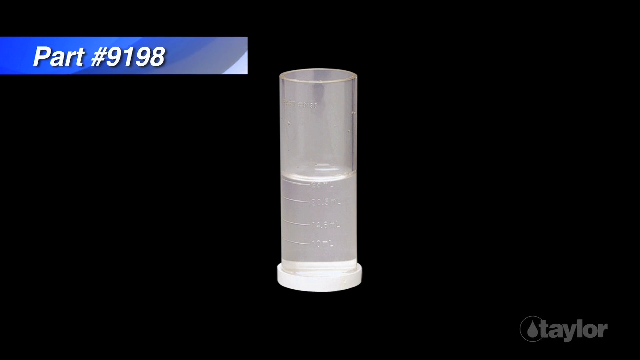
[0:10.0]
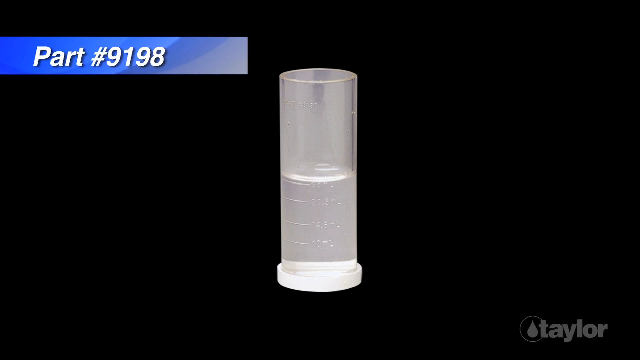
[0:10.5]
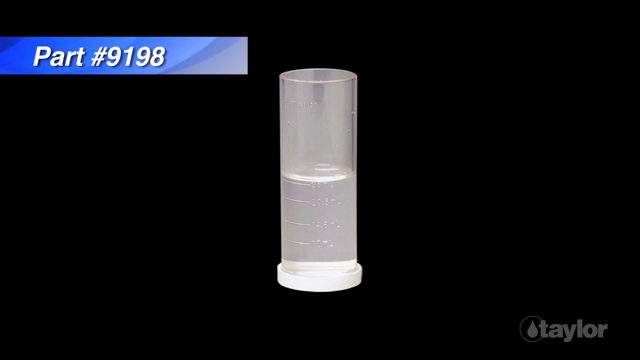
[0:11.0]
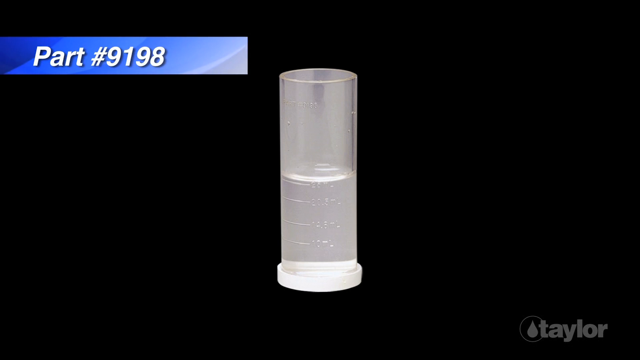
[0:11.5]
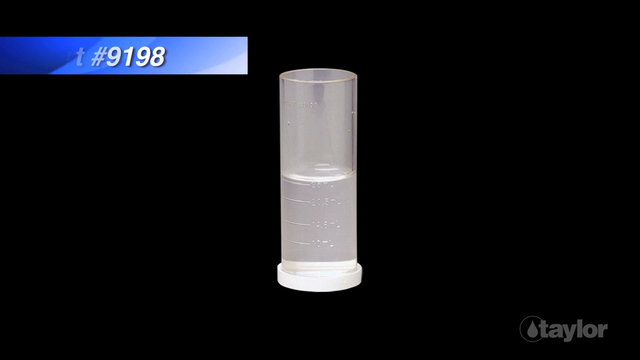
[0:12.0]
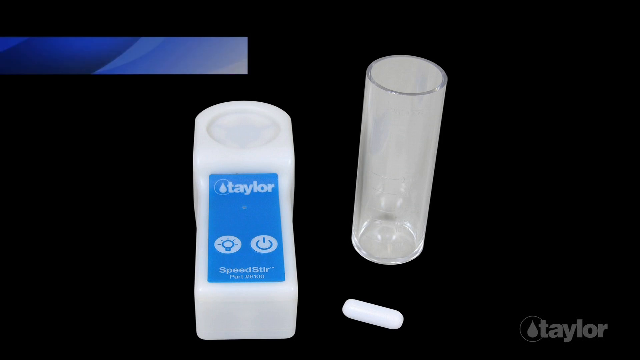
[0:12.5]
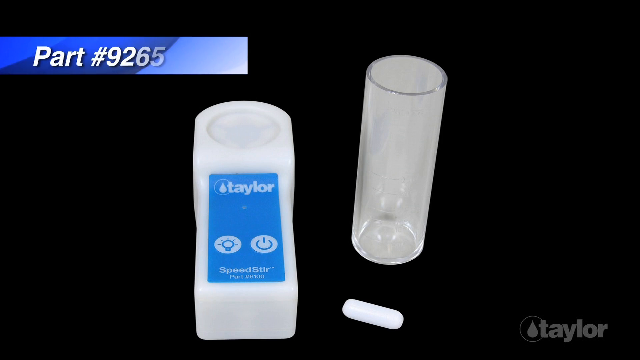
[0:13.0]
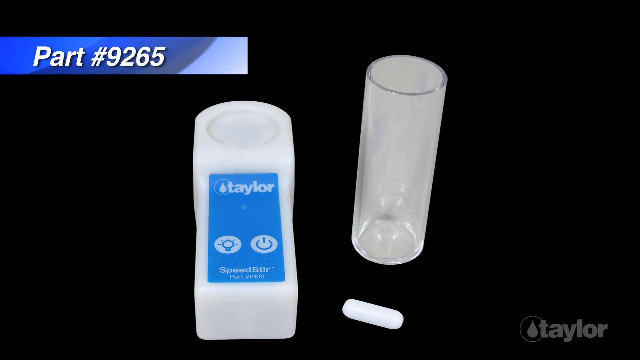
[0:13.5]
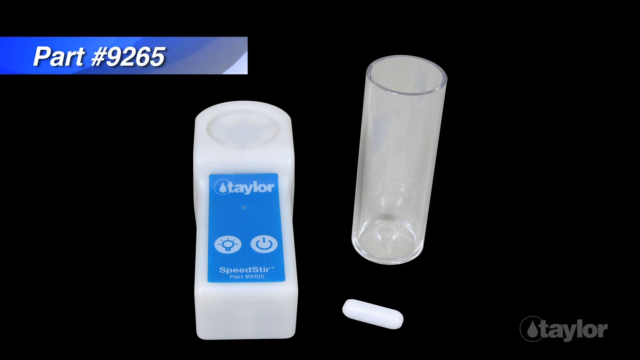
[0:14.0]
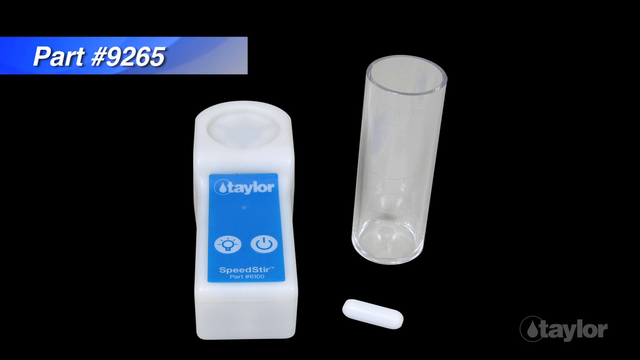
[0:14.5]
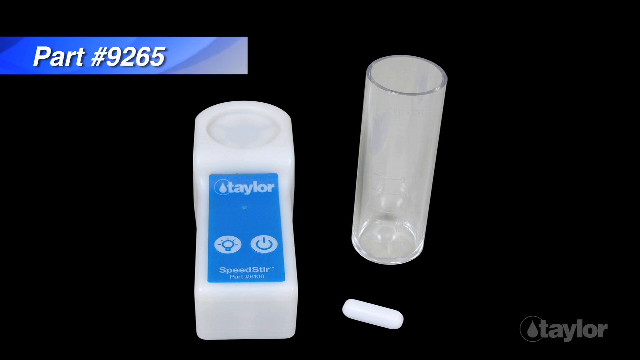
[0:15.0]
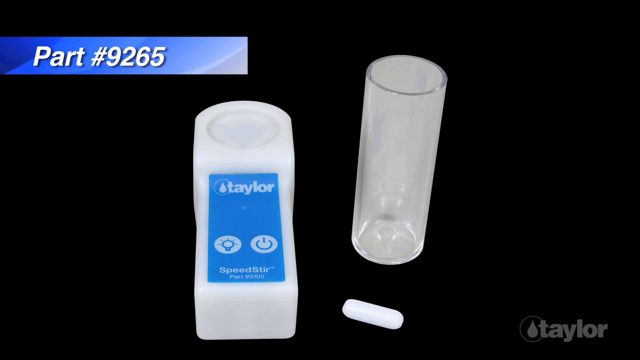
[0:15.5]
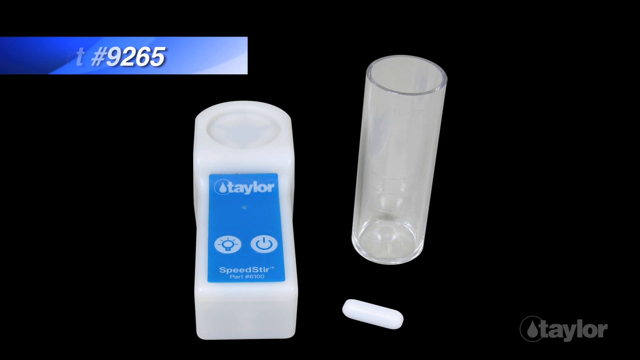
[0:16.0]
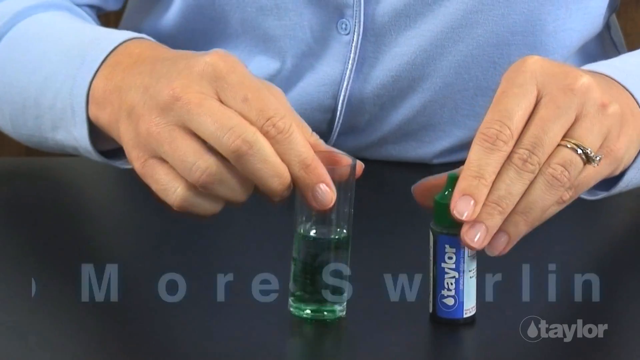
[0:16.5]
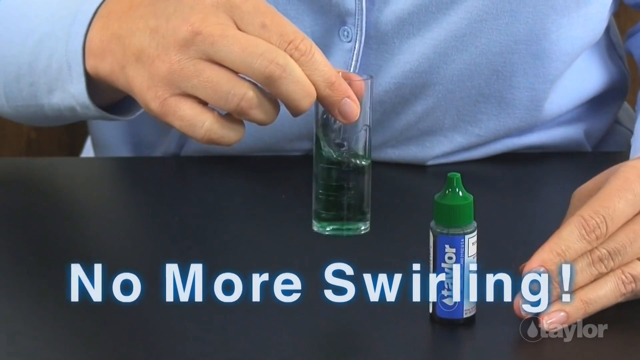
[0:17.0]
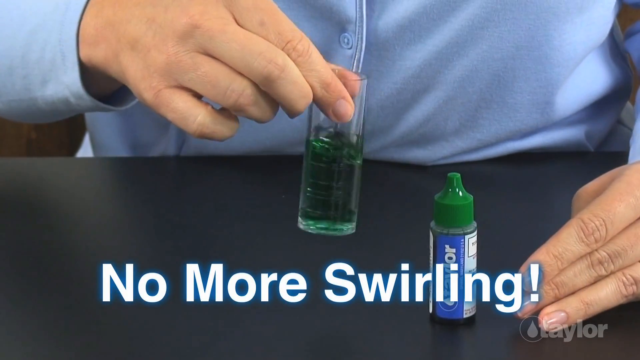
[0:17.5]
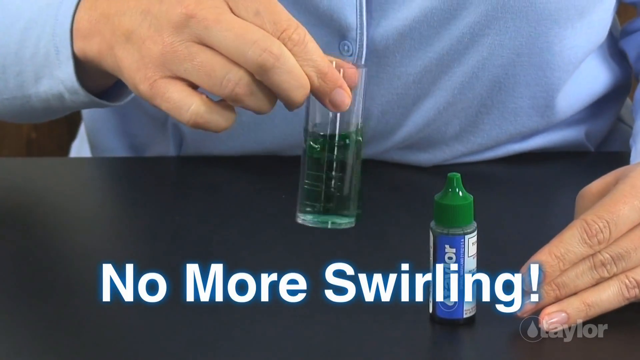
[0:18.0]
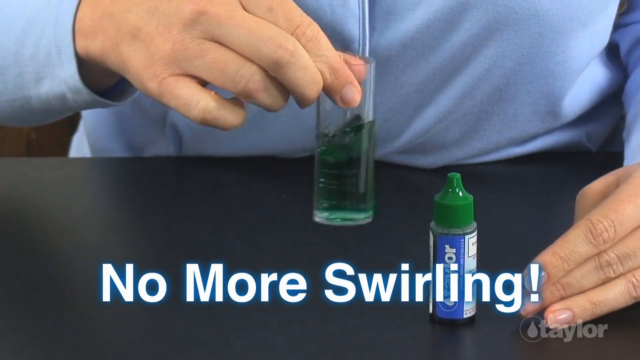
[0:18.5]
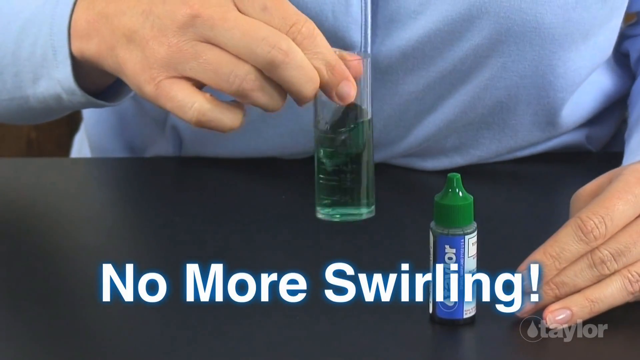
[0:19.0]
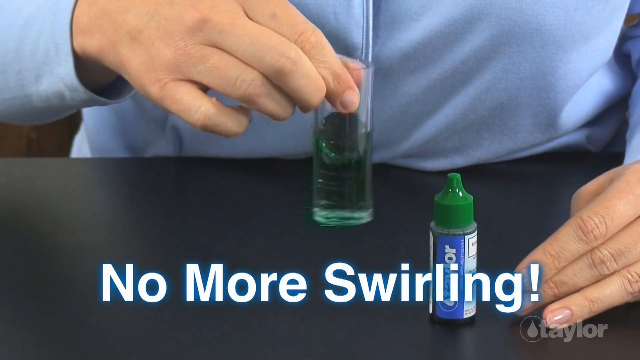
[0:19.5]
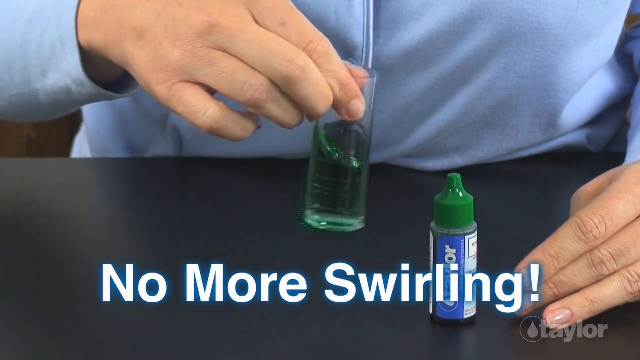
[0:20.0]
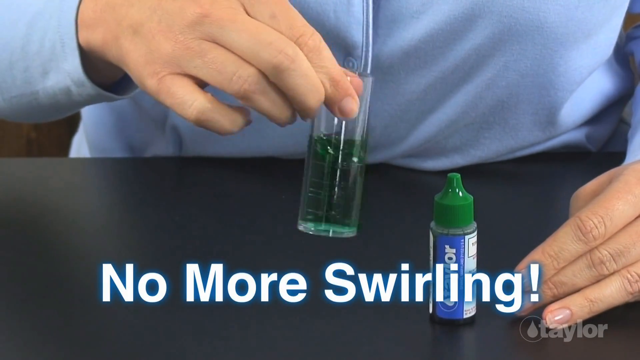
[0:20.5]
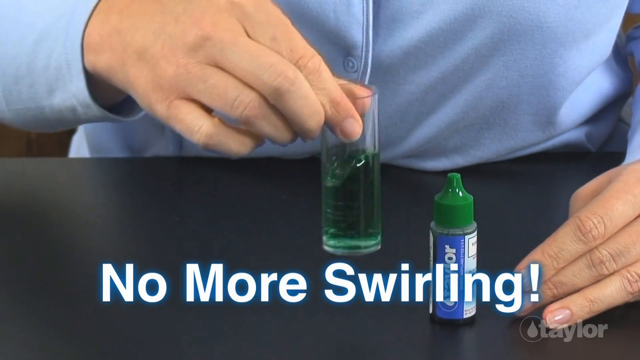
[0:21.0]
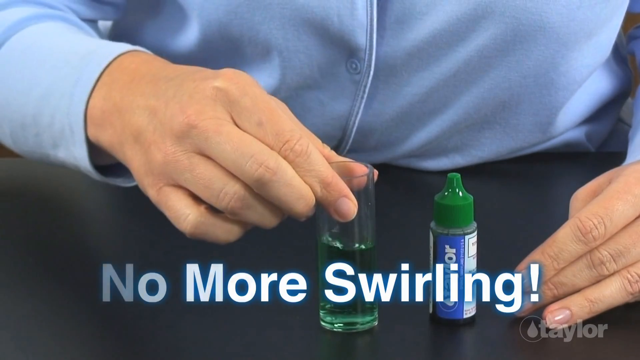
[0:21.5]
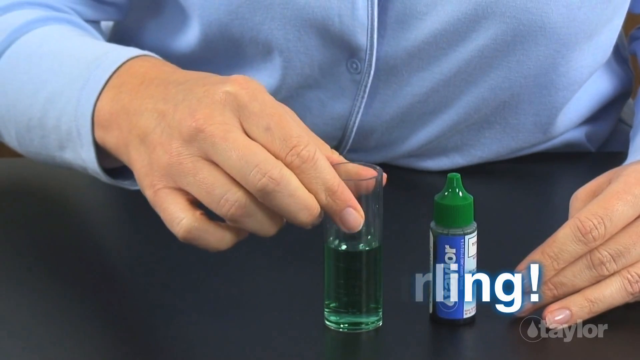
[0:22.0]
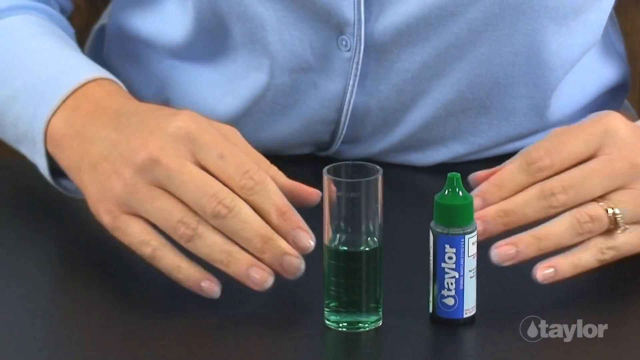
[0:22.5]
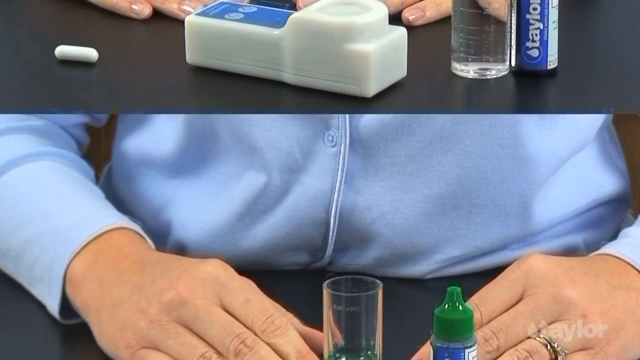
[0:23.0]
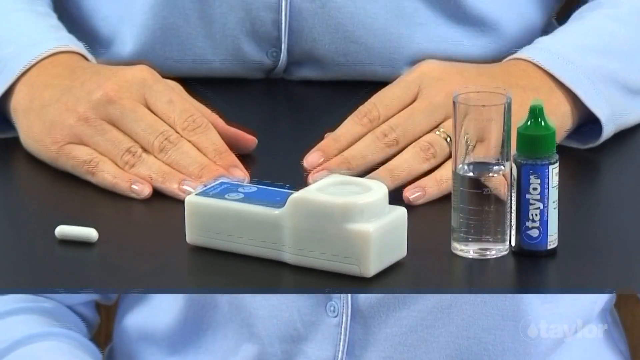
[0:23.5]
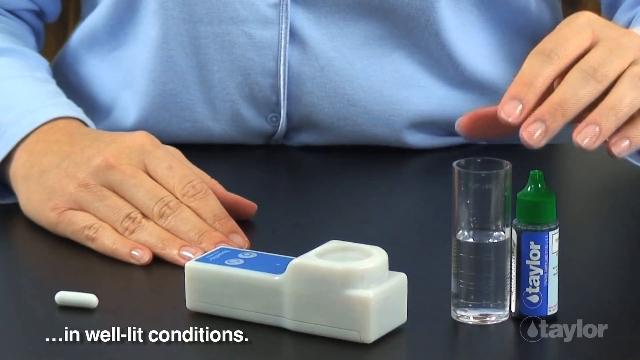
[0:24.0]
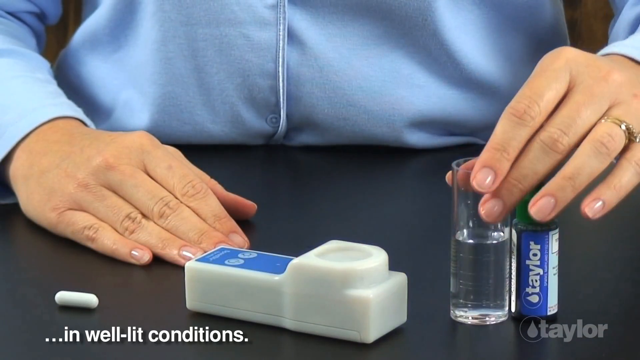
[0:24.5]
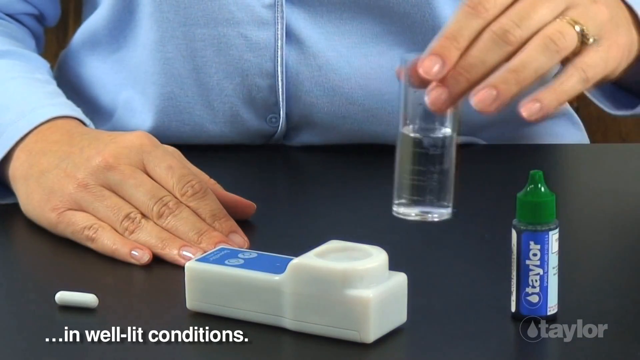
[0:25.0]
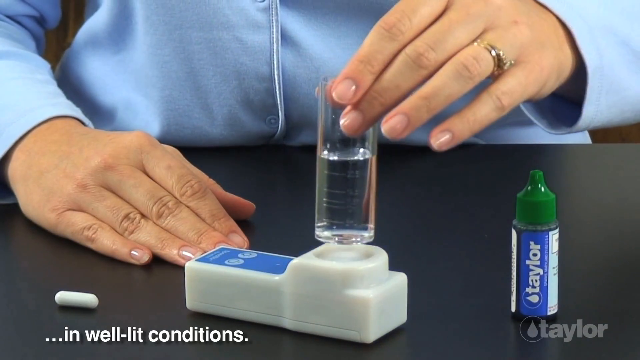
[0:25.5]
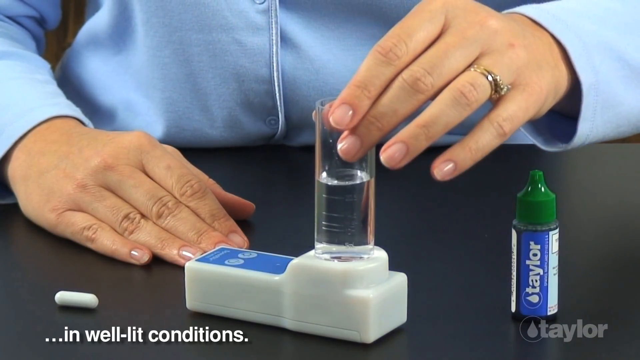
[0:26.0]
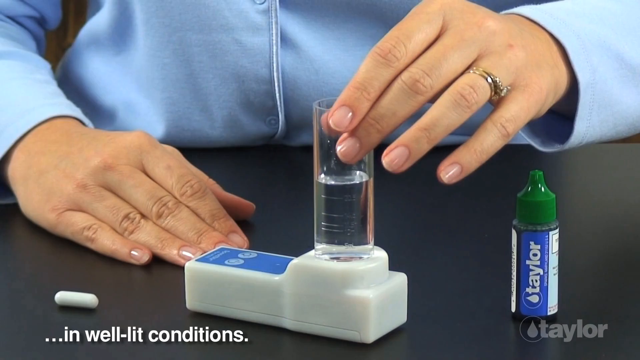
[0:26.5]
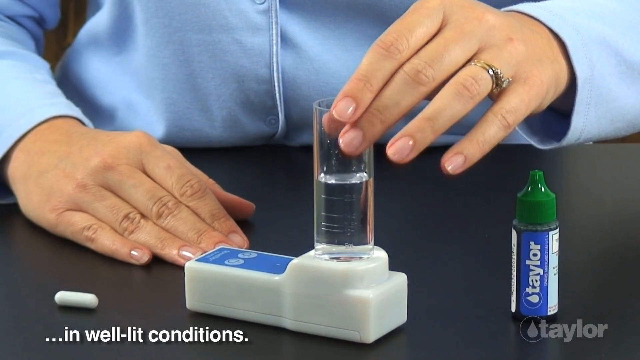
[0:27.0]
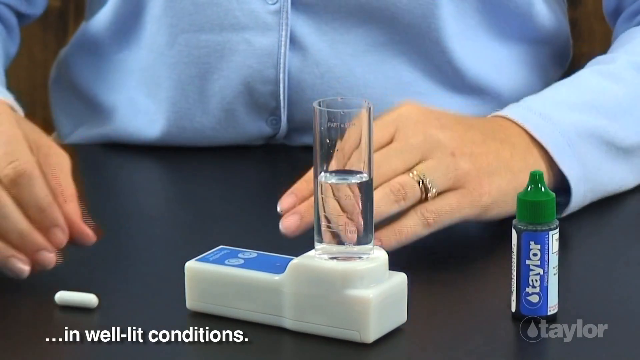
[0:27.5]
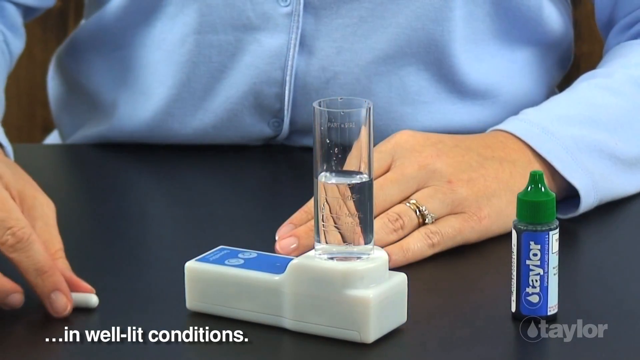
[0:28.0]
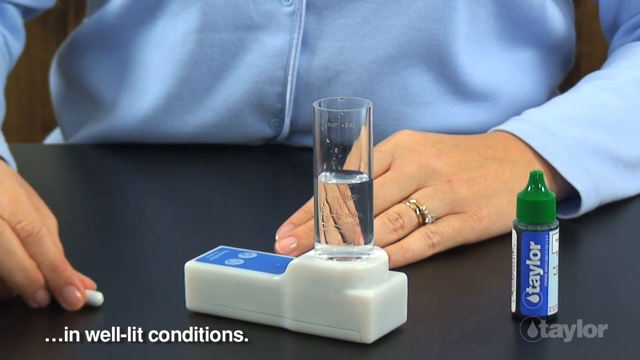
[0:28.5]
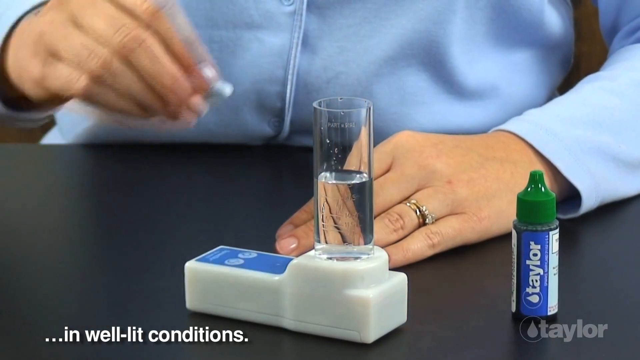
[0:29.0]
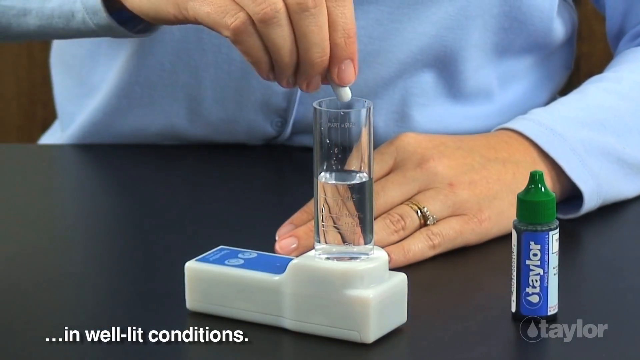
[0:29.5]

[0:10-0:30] A graphic on a black background shows a small plastic canister, a kind of upright tube, in the middle of the image. In the upper left is a blue text banner with white text reading "part number 9198". The banner starts bright blue on the left, graduates into a grayish tone, and is gray in its lower right corner; it is moving and swirling, with the blue moving across it. Then a new part appears, labeled "part number 9265", with a similar white upright canister, apparently a cylinder. To its left is a white plastic piece lying on the table with a rectangular sticker that reads "taylor" and "speedstir", and what looks like a large tablet is in front of the cylinder. Next, a graphic shows white text reading "no more swirling". A man in a light blue shirt is seen only from his stomach area and hands: his left hand rests on a black table while his right hand swirls green liquid in the plastic cylinder. Behind him is what looks like a small squirt bottle of medicine with a green top and a blue label. He puts the cylinder down on the table. The image disappears from top to bottom and a new one comes in from the top, showing the person holding a clear cylinder full of clear liquid and placing it on the white plastic piece with the blue label, which has a hole on top for it. The green medicine bottle is still on the table to the right. The person, possibly a woman, rests the right hand on the table, and the left hand has a ring that looks like a wedding ring. The person puts the cylinder into the white contraption, then takes the white pill and puts it into the clear liquid.